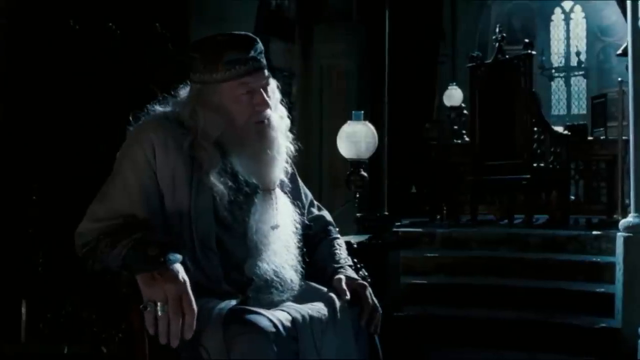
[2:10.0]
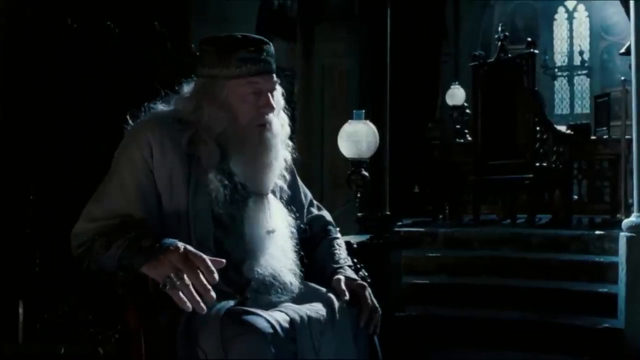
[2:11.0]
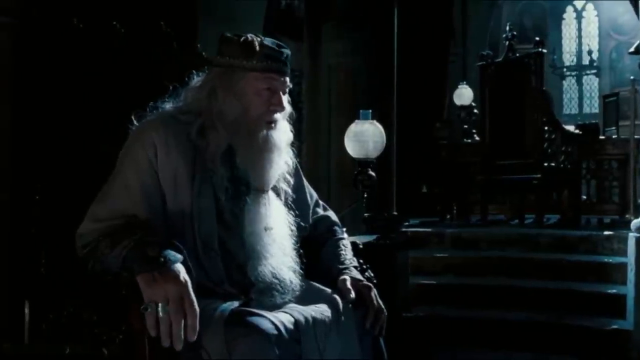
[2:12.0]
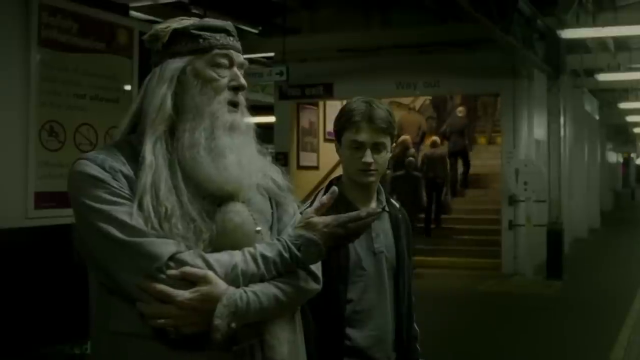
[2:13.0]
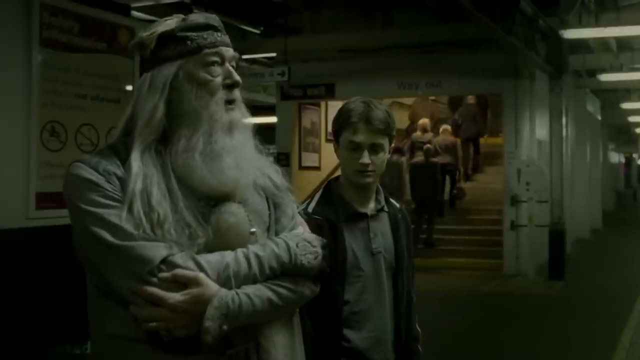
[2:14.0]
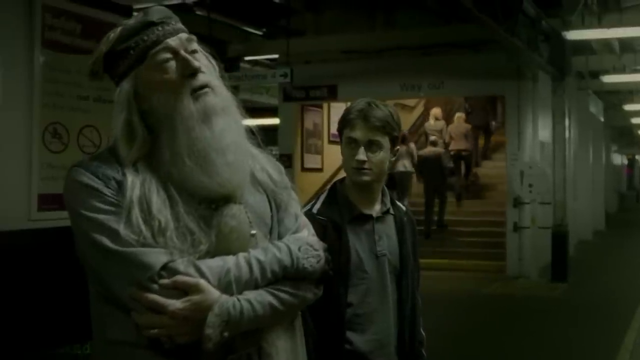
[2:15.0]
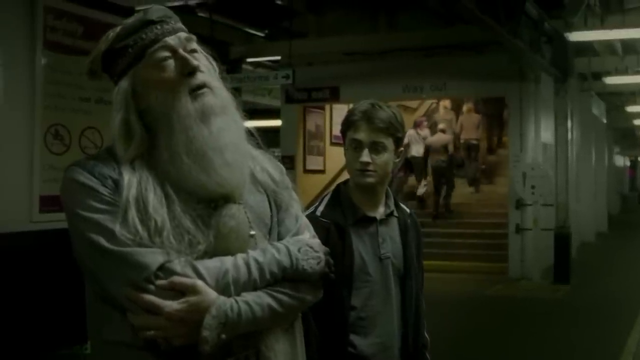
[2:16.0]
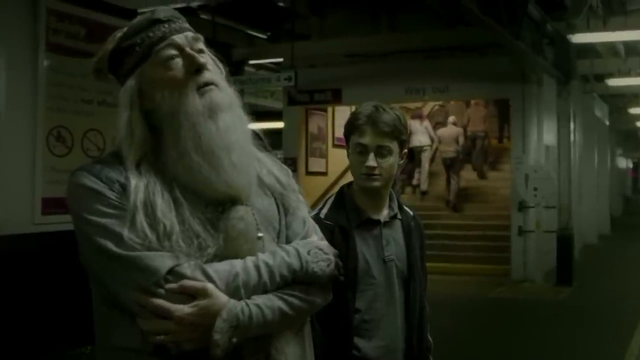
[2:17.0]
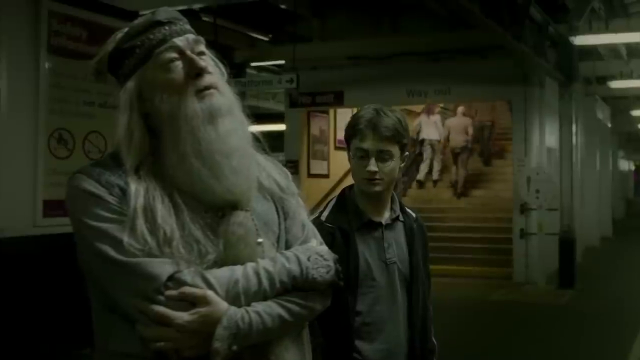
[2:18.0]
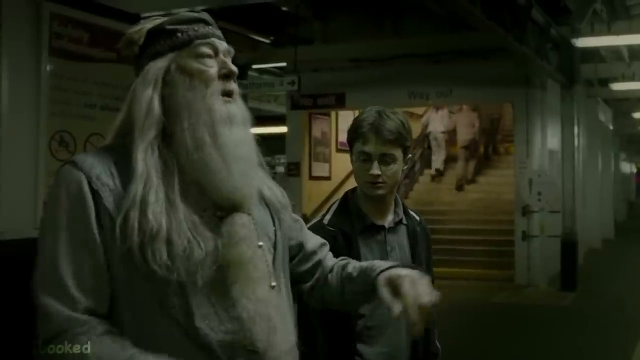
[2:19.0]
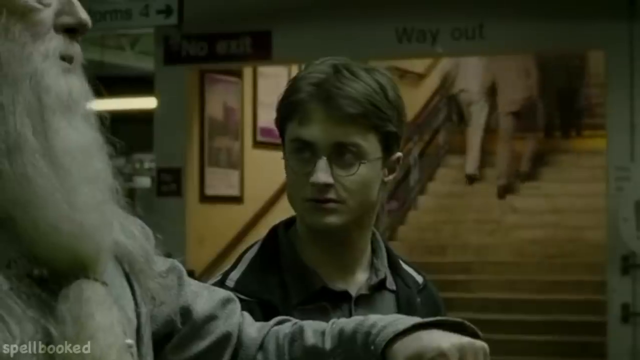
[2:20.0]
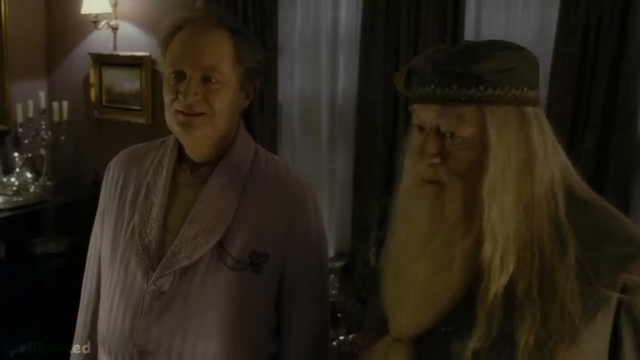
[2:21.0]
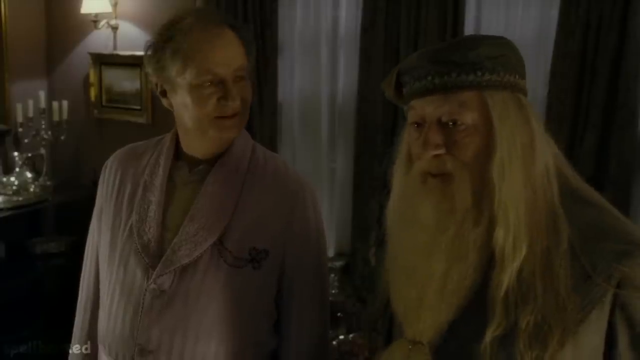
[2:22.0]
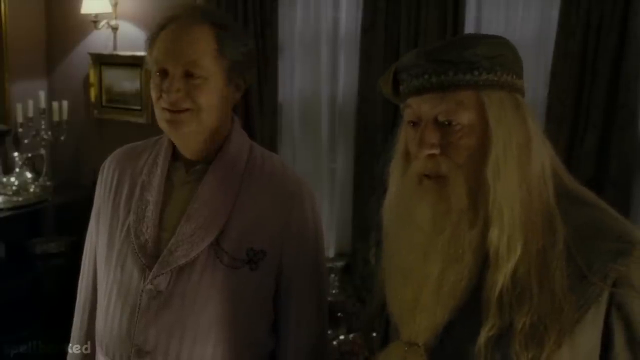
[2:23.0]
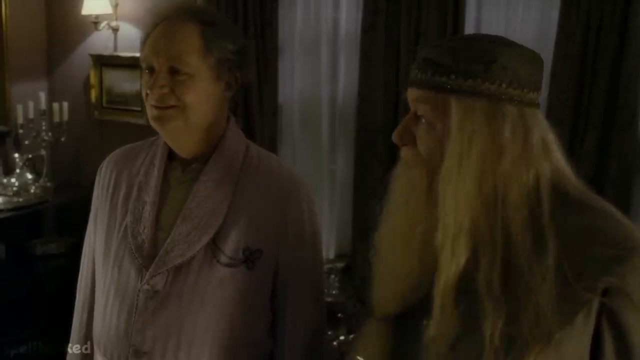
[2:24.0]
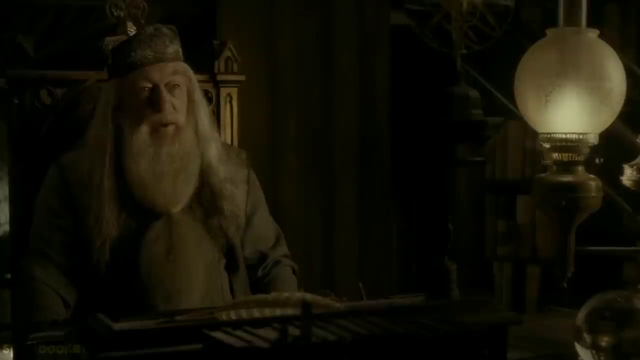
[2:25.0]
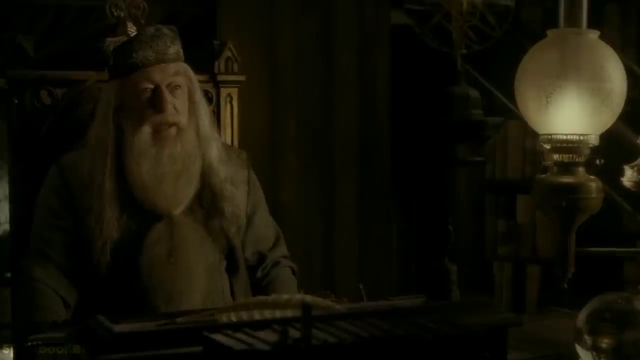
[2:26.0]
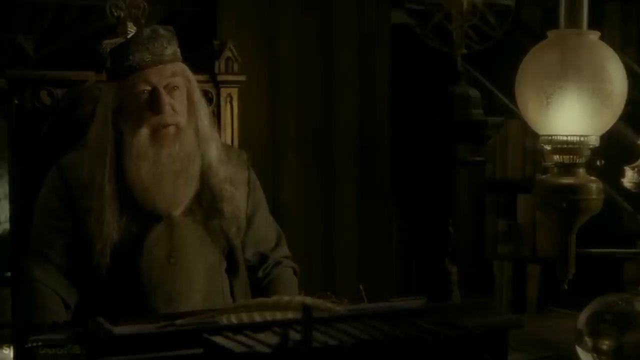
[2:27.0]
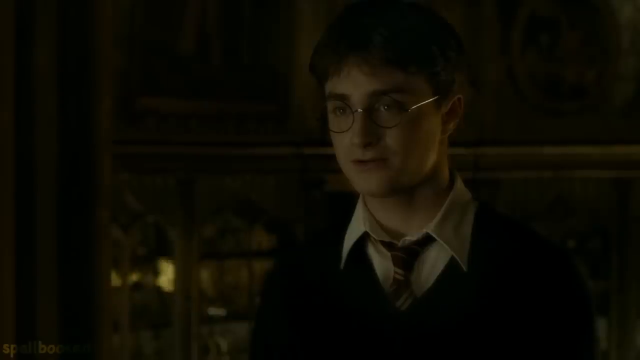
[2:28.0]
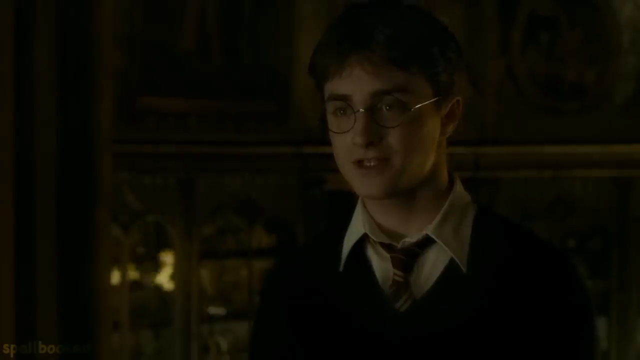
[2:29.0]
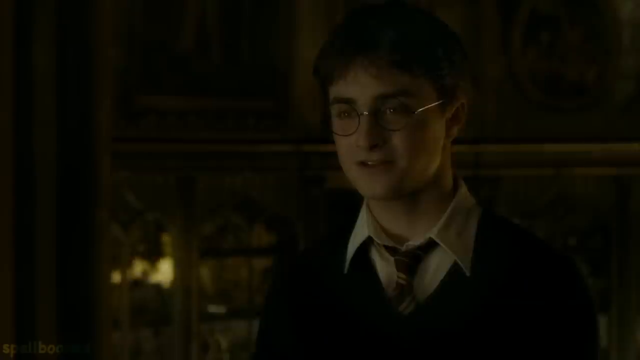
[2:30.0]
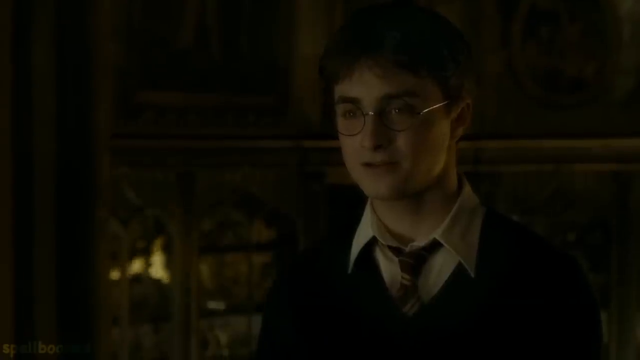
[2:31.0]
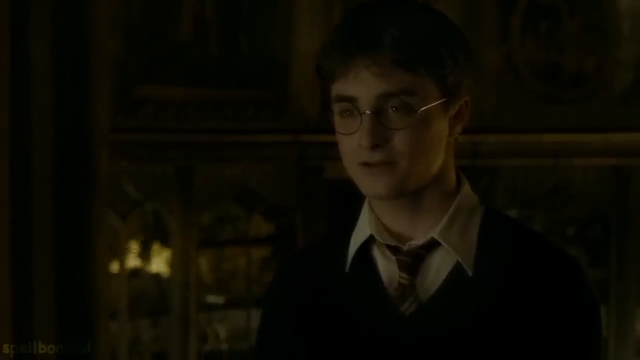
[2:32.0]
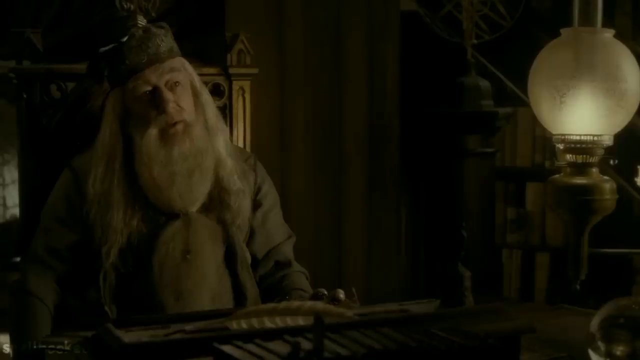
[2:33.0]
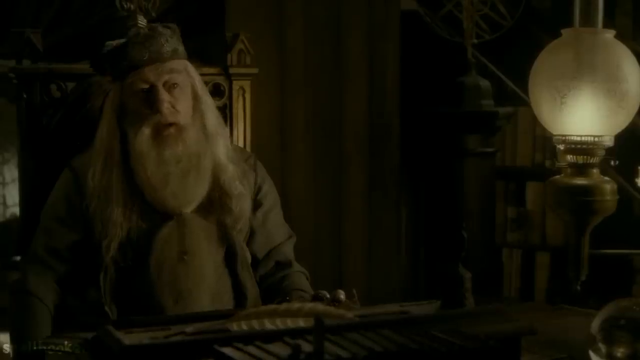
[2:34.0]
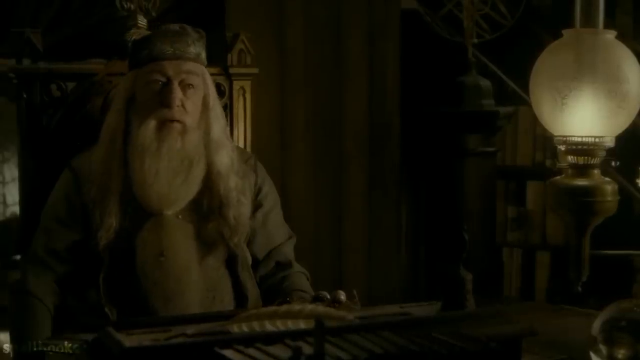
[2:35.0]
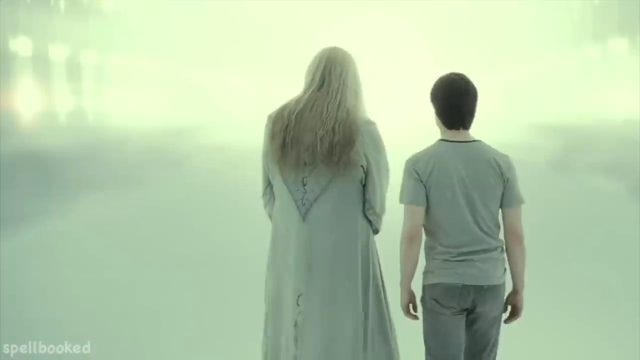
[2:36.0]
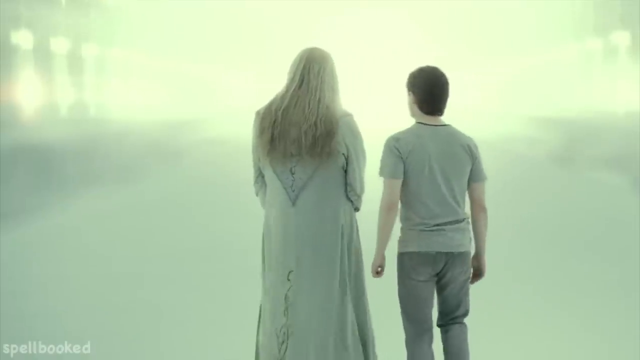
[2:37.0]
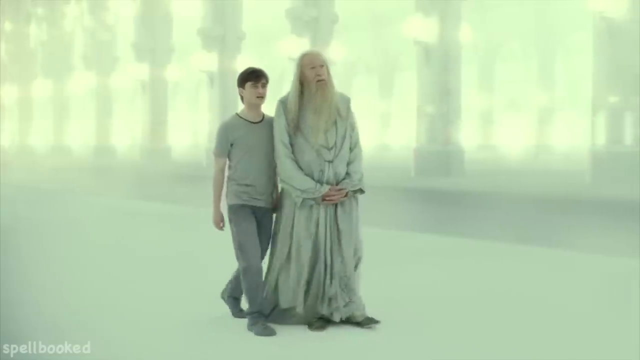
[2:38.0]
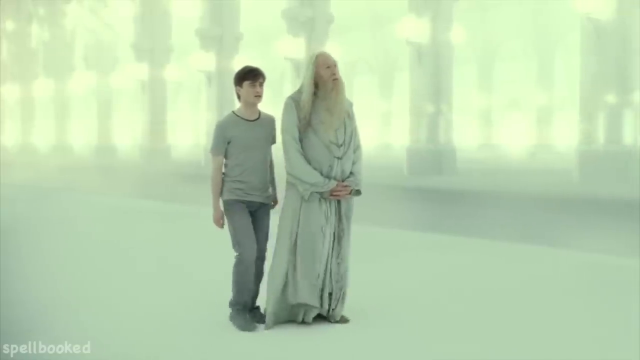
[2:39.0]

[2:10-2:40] Dumbledore is probably in his office. It is darker, with just a little light next to him. He sits in a chair talking to someone who cannot be seen. The scene switches to Dumbledore and Harry in what looks like an underground tube station, like a subway, with people going up the stairs while the two stand waiting for the train. Harry is dressed in street clothes and Dumbledore is in his usual robes. It switches again to Dumbledore in a house, in the scene where a professor is acting as if he is a chair and Dumbledore is trying to talk him into coming back to Hogwarts; the professor wears what looks like a purple shower robe in his house. Next, Dumbledore sits back in his throne chair, apparently talking to Harry. The shots go back to just Dumbledore, then to Harry, and then Dumbledore and Harry walk through what may be a tunnel, with so much light in front of them that nothing else can be seen.